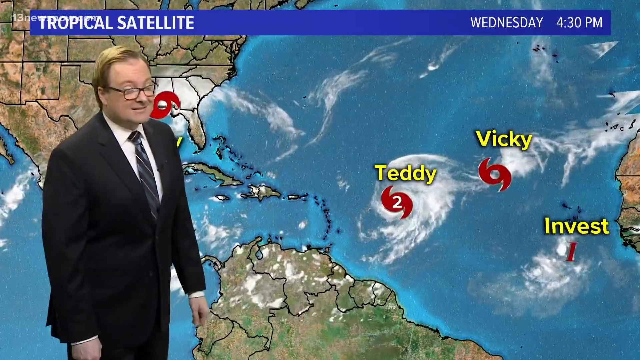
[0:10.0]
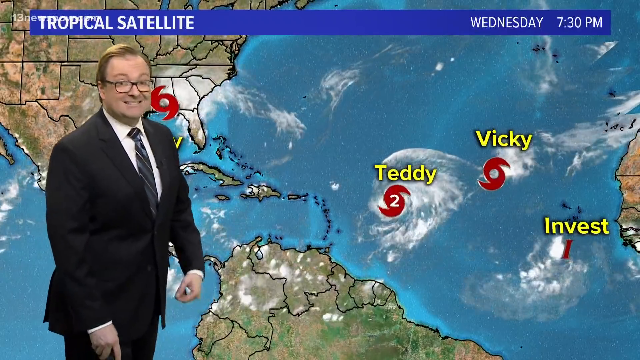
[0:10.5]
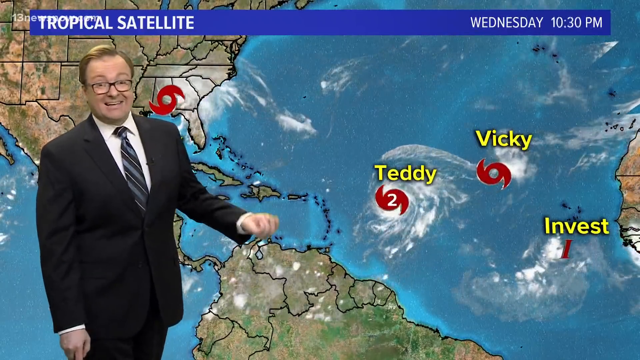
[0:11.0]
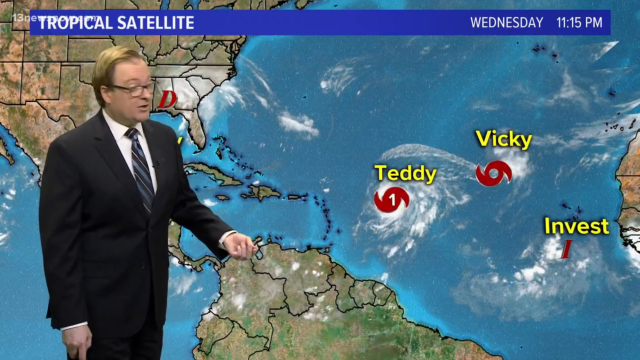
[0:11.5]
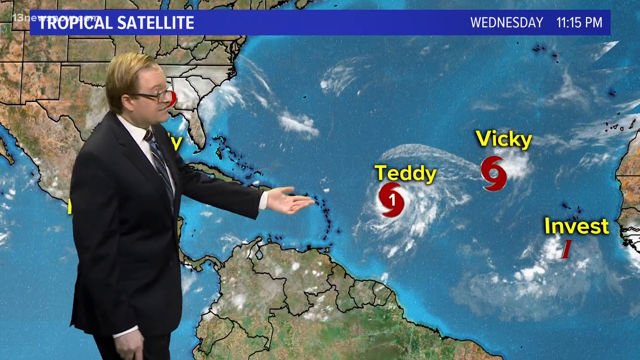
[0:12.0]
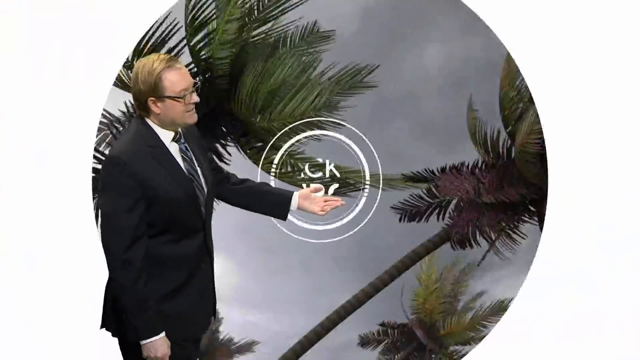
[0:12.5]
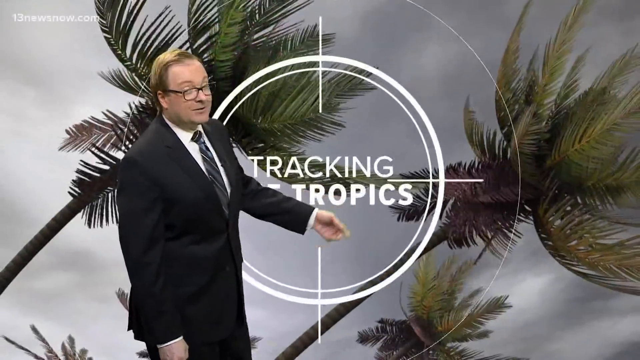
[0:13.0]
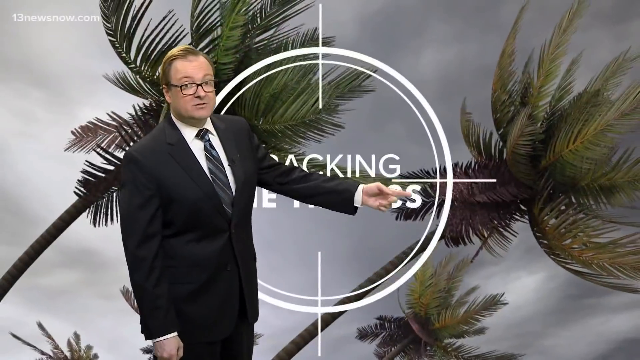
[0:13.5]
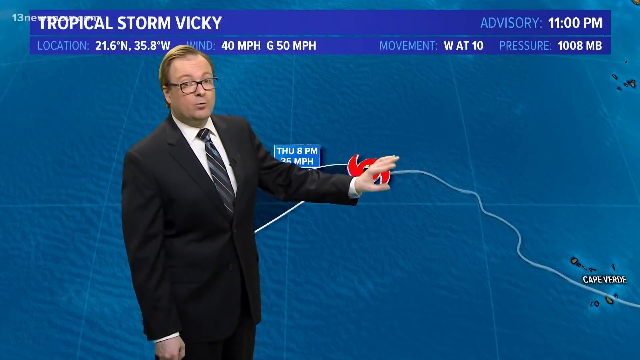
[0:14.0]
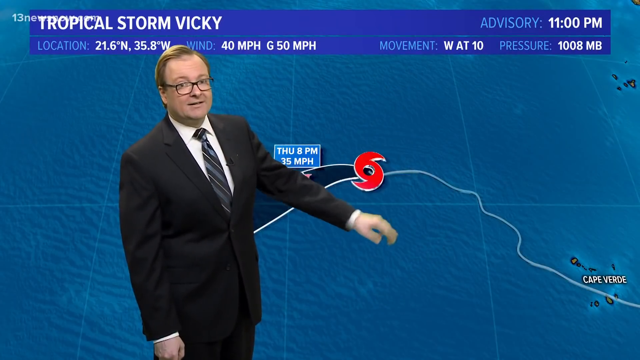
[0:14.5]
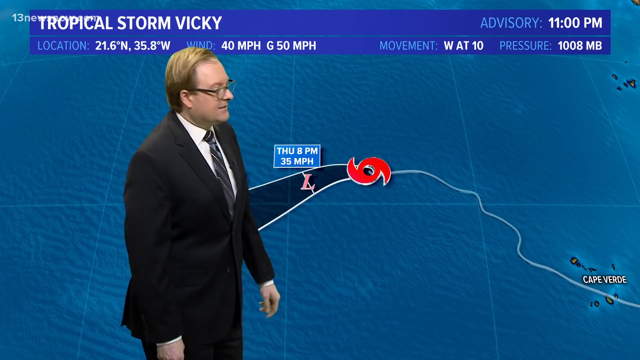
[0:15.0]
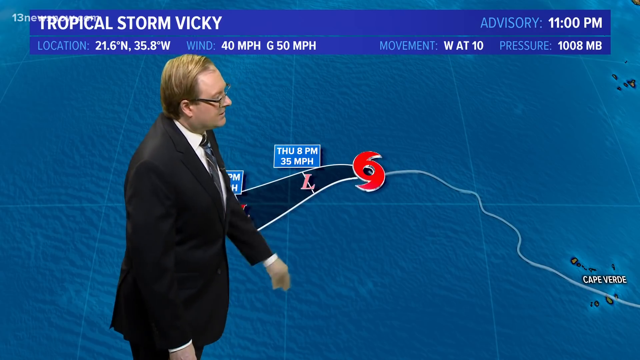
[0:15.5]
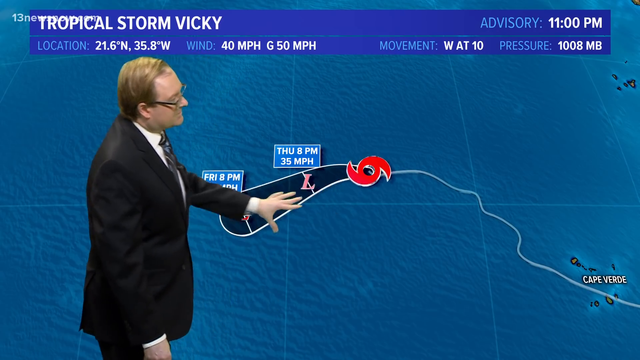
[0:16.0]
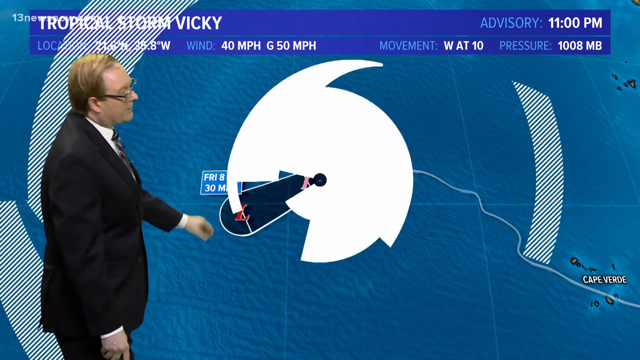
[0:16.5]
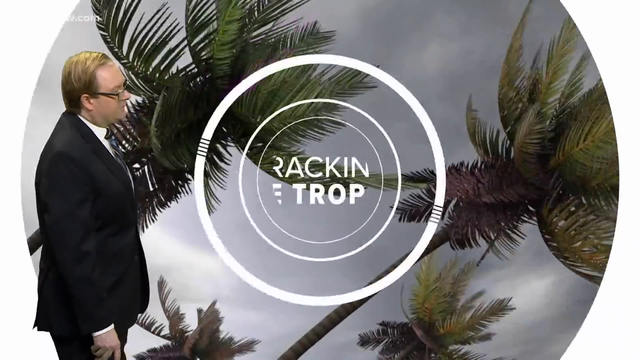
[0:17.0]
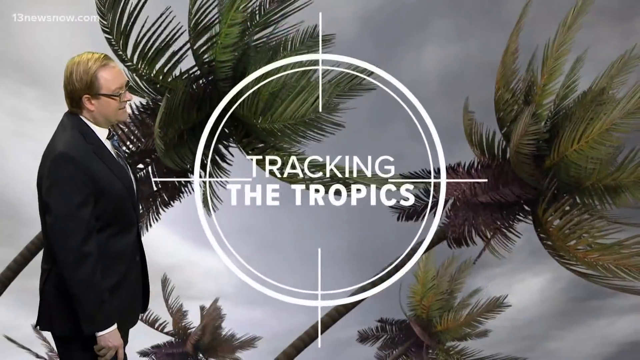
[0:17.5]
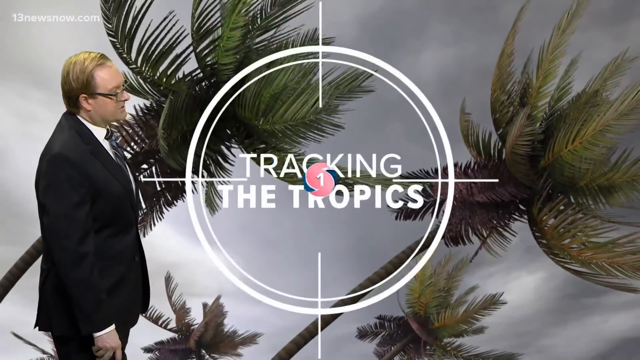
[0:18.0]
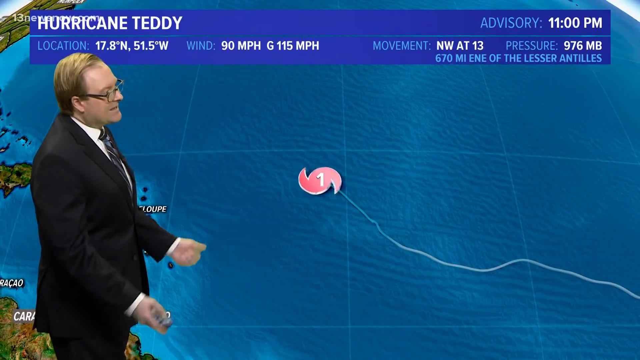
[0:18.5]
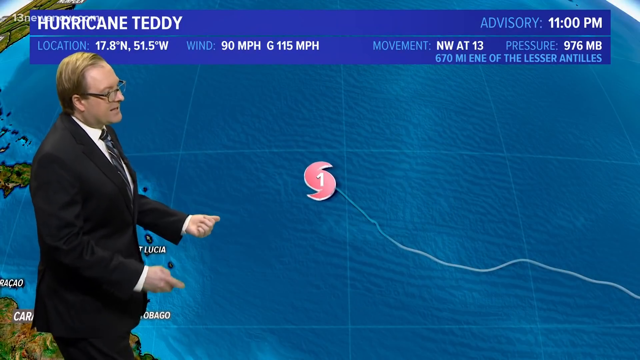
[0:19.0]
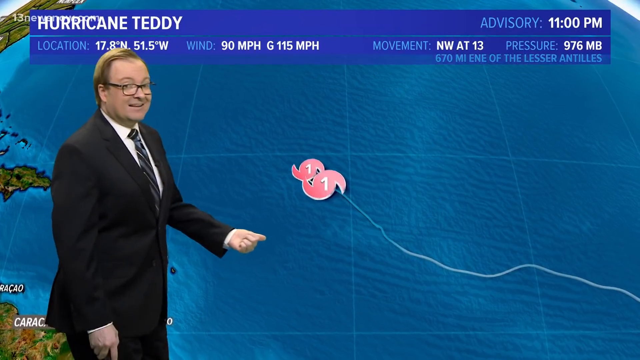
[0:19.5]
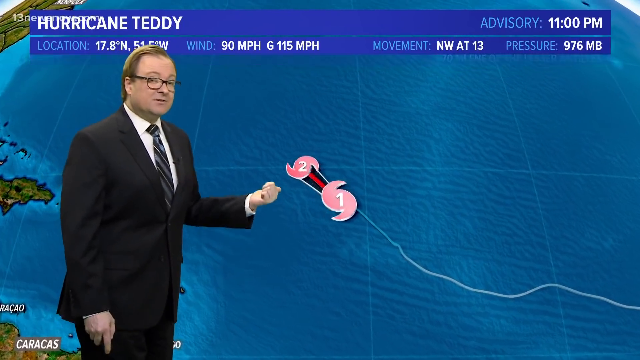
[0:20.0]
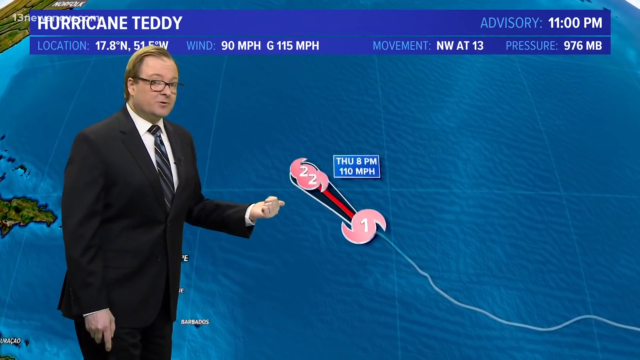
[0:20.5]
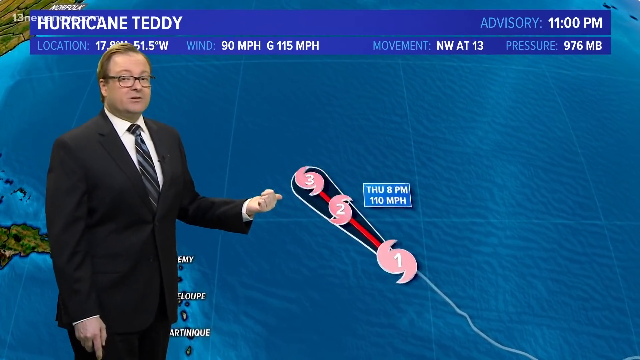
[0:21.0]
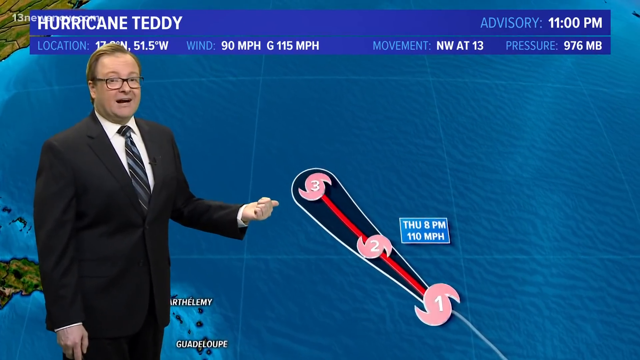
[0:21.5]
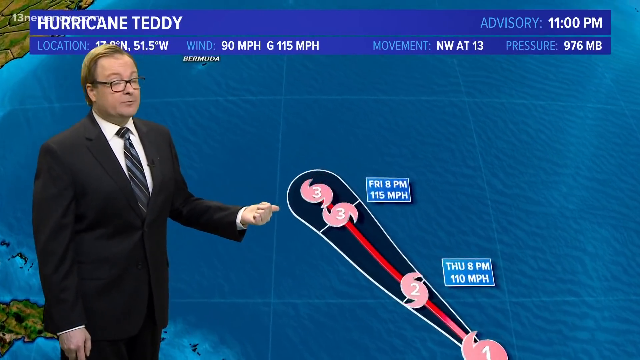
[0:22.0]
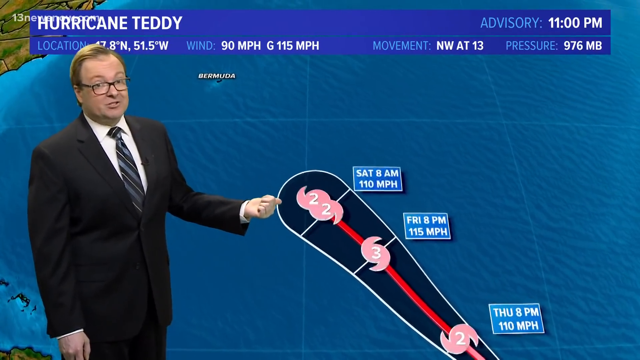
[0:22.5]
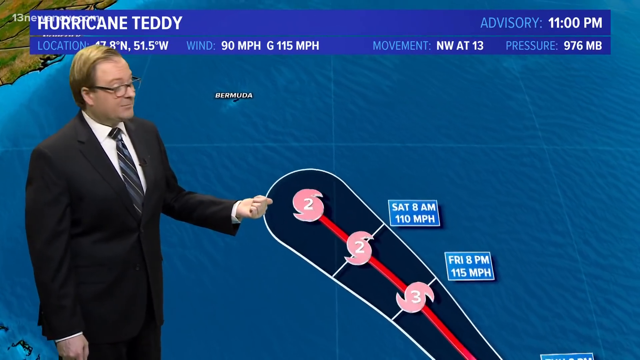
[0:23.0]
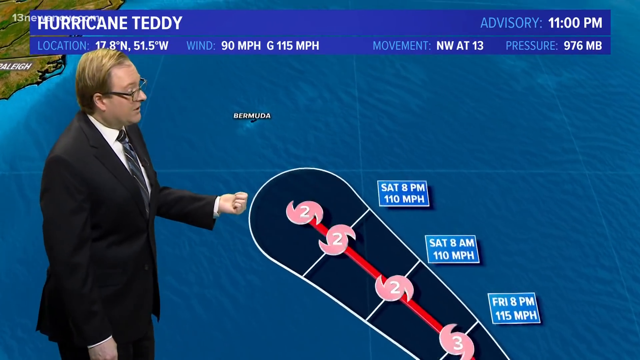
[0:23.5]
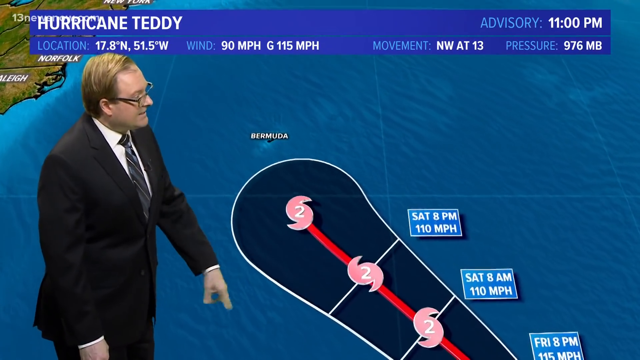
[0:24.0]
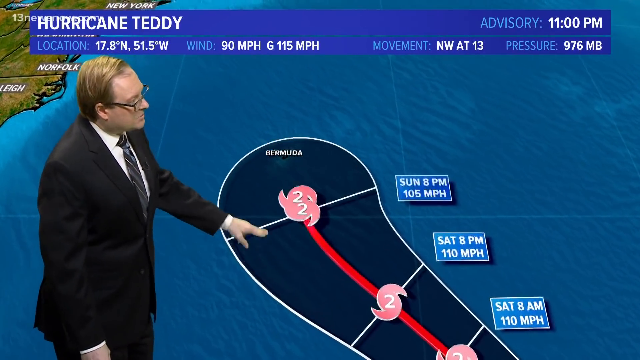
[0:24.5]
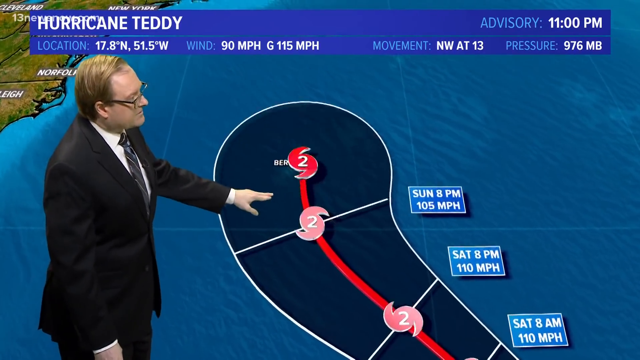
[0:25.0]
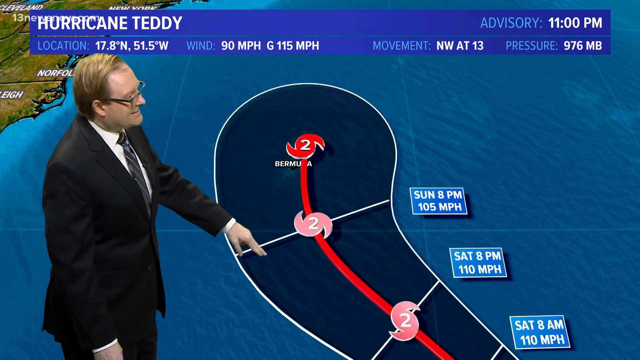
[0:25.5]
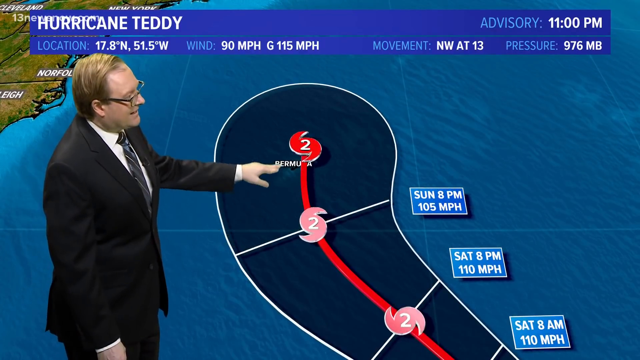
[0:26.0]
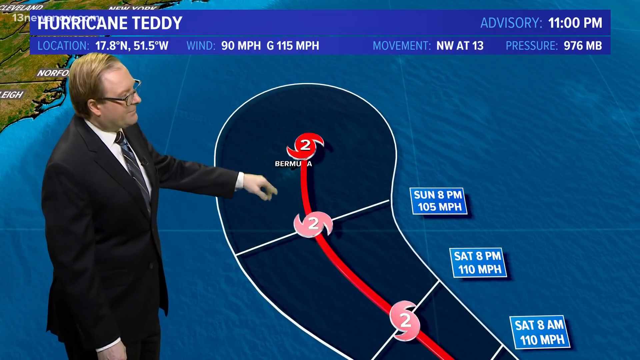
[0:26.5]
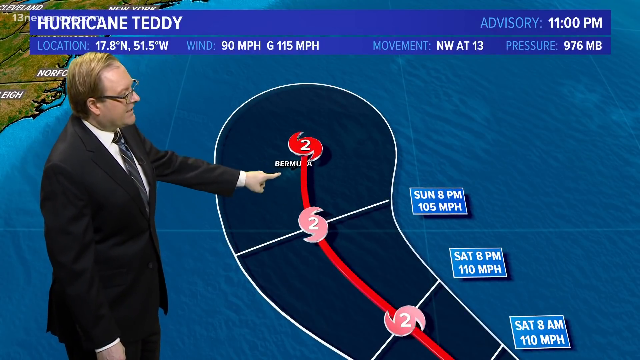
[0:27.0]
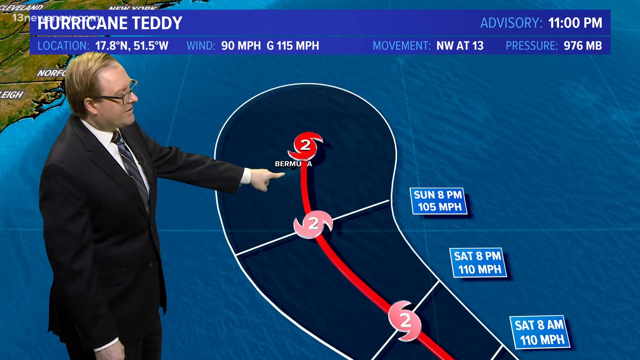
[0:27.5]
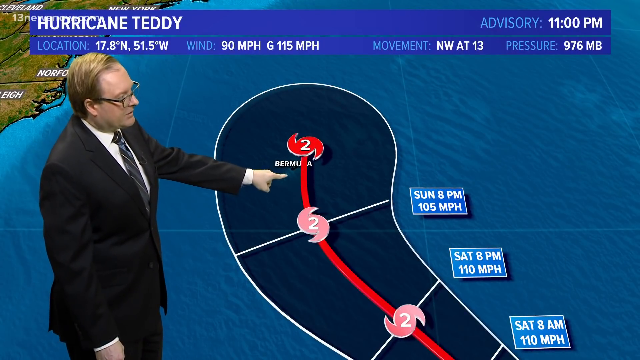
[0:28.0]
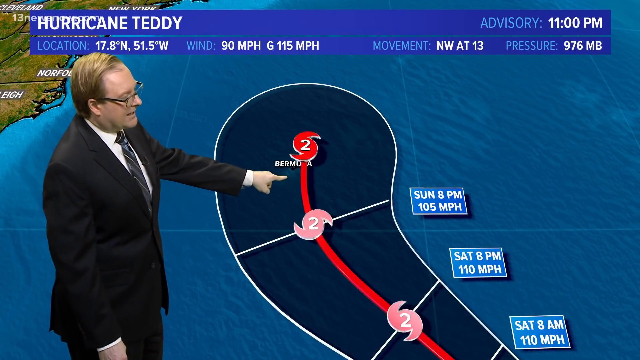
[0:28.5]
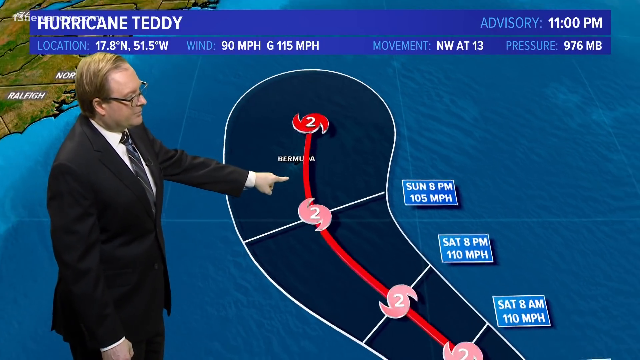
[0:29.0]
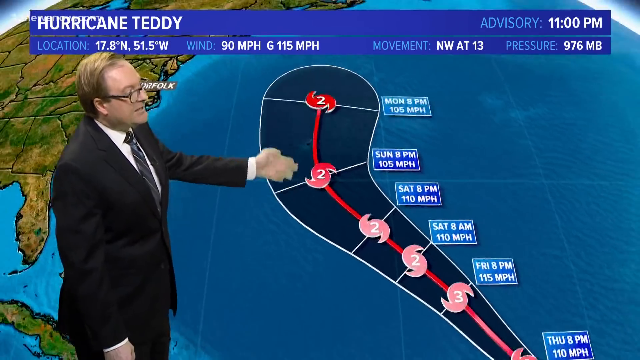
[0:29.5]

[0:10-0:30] A background with what look like palm trees appears. The scene then changes to a screen with the heading "tropical storm Ziki" and an advisory for 11 p.m., giving the location as 21.6 degrees north, 35.8 west, the wind as 40 mph "G50 mph", and the pressure as 1008 mb. The background changes to blue. Different areas are then shown with the expected times the storm would hit them, with days from Monday to Sunday.